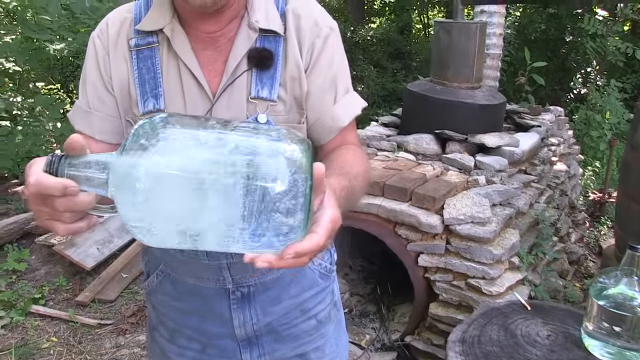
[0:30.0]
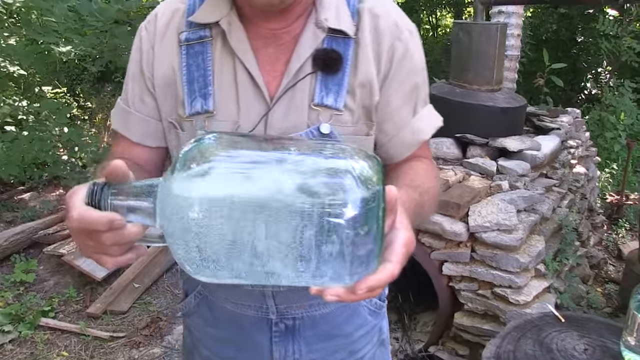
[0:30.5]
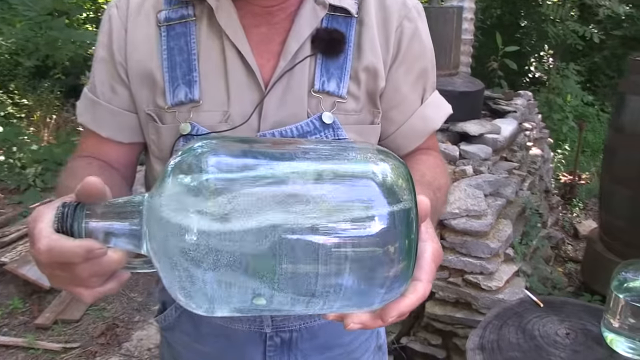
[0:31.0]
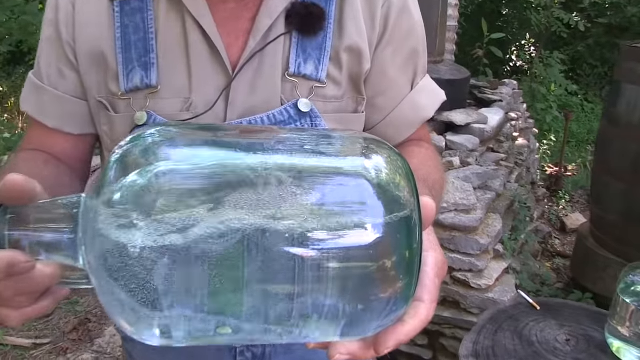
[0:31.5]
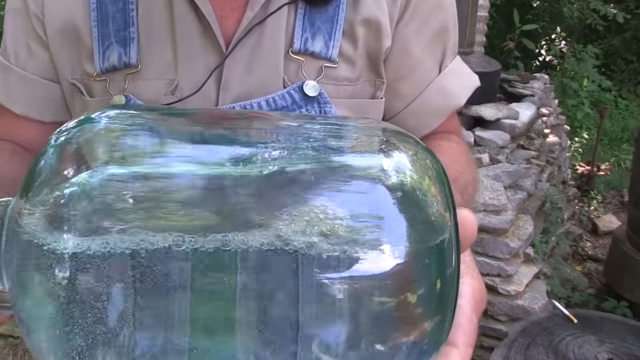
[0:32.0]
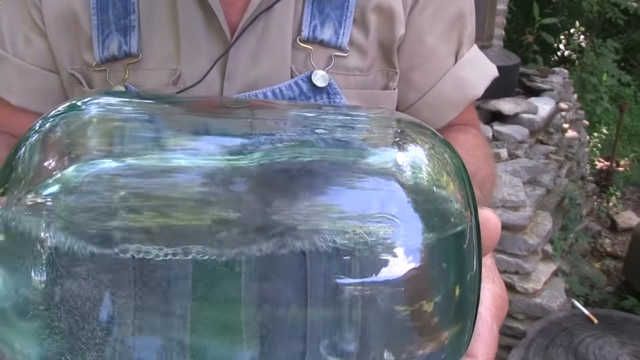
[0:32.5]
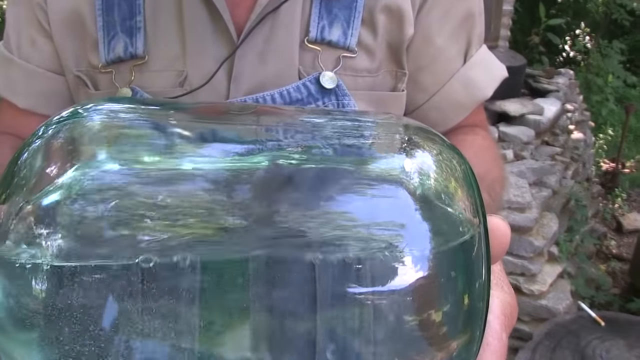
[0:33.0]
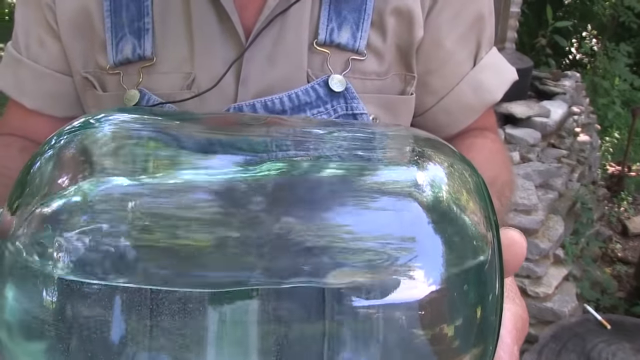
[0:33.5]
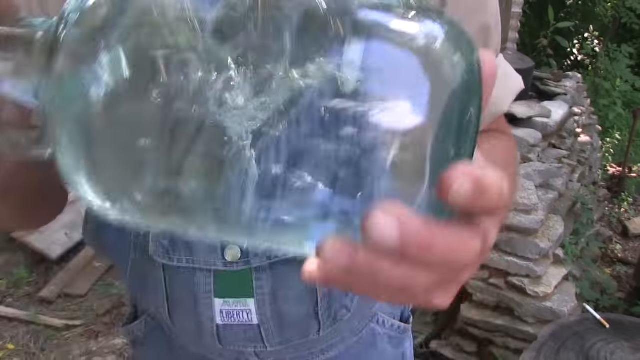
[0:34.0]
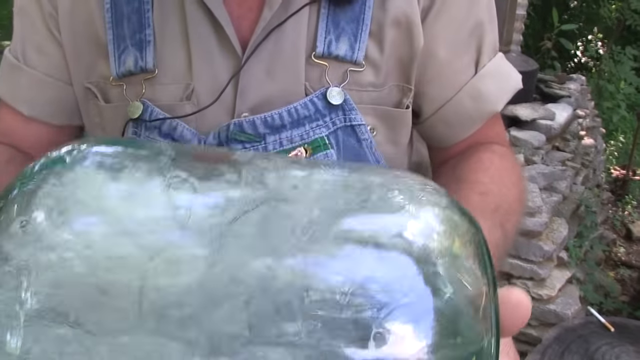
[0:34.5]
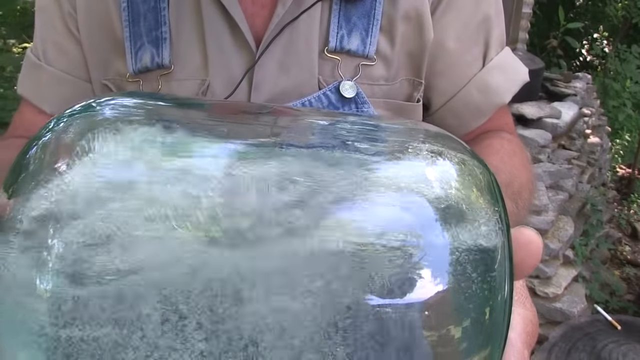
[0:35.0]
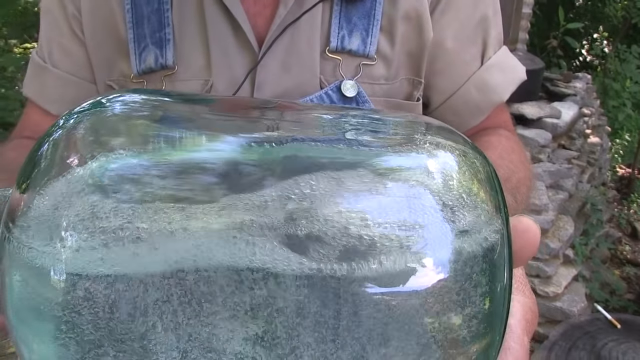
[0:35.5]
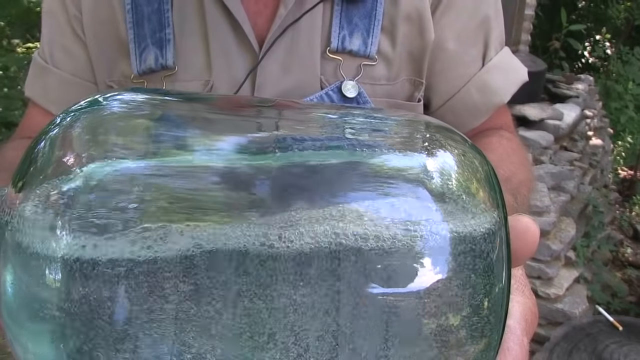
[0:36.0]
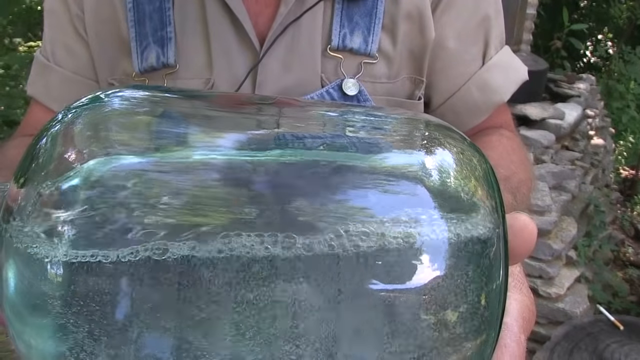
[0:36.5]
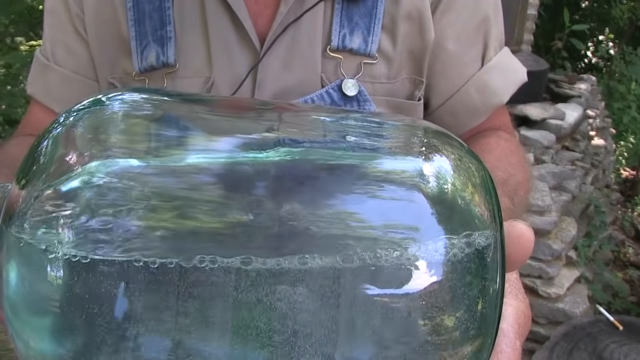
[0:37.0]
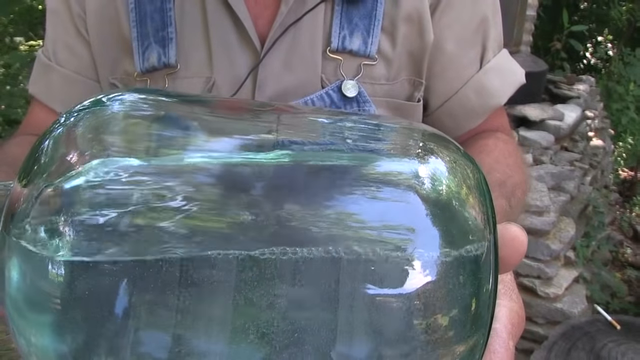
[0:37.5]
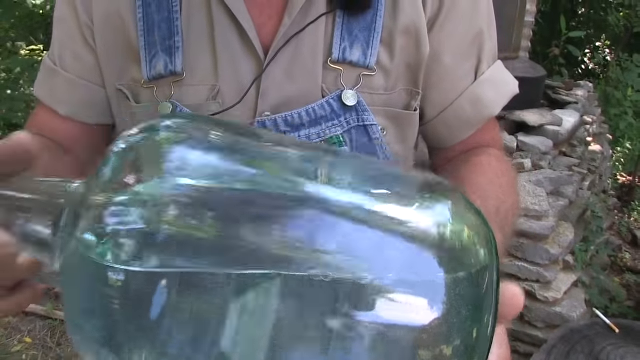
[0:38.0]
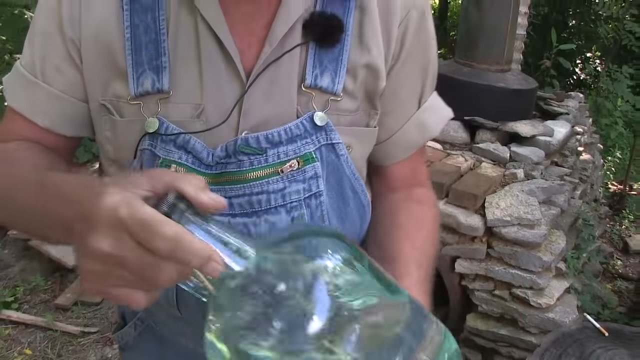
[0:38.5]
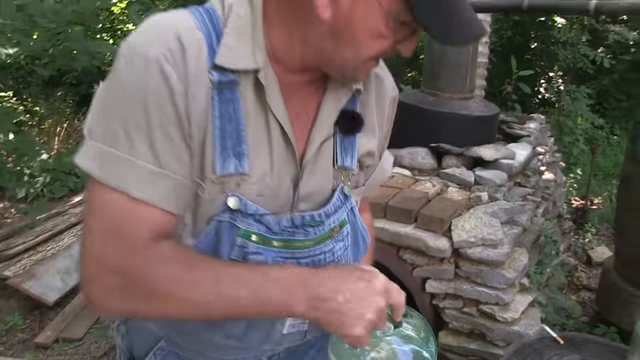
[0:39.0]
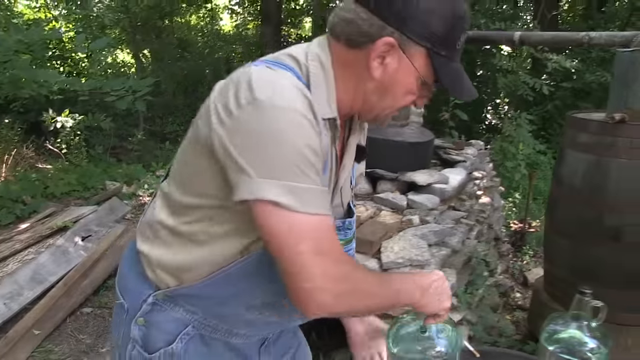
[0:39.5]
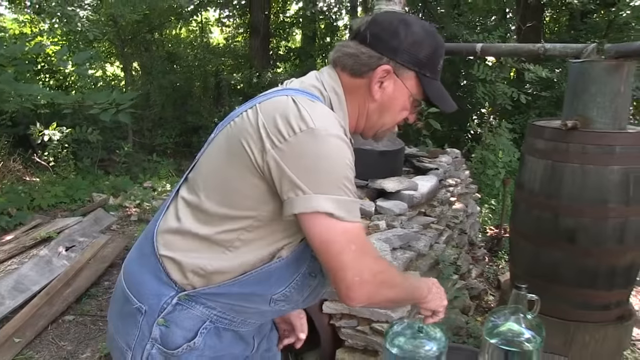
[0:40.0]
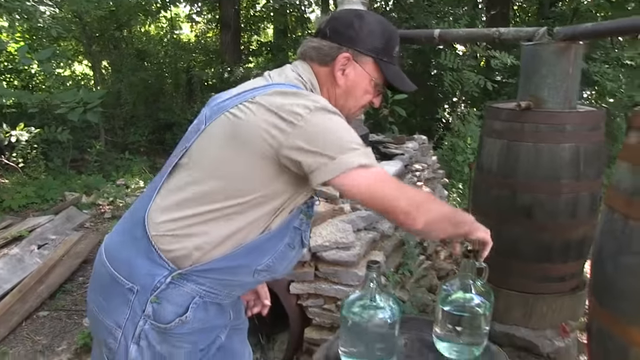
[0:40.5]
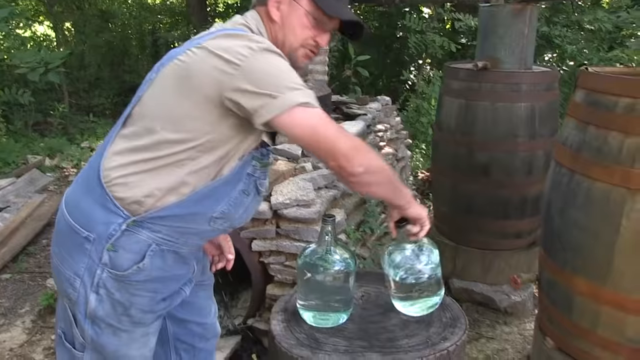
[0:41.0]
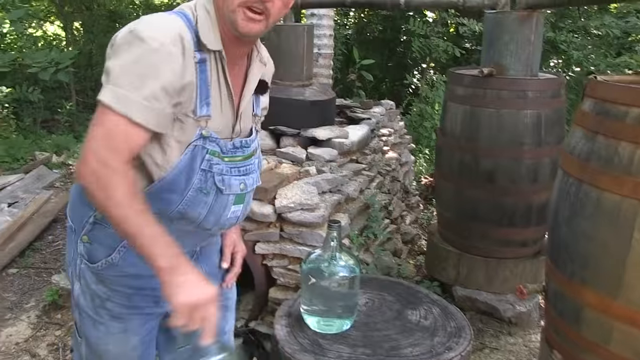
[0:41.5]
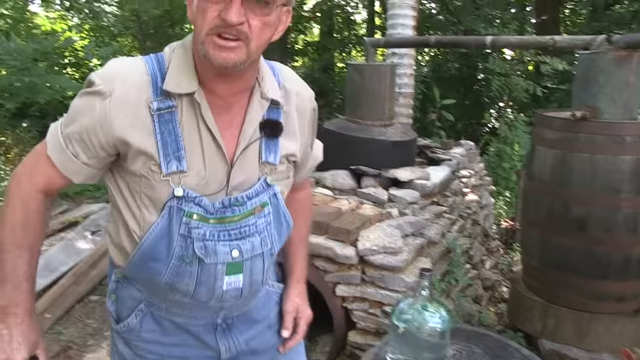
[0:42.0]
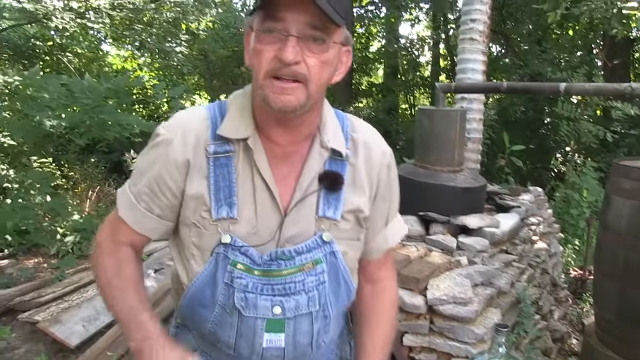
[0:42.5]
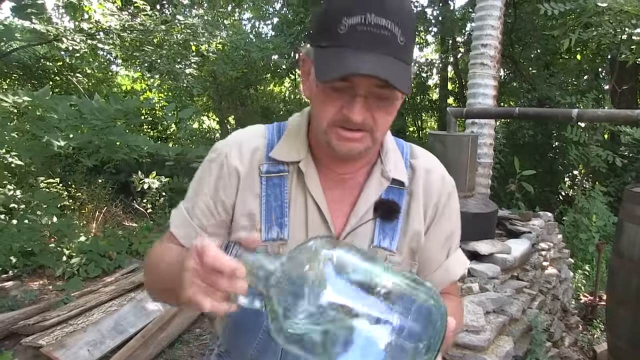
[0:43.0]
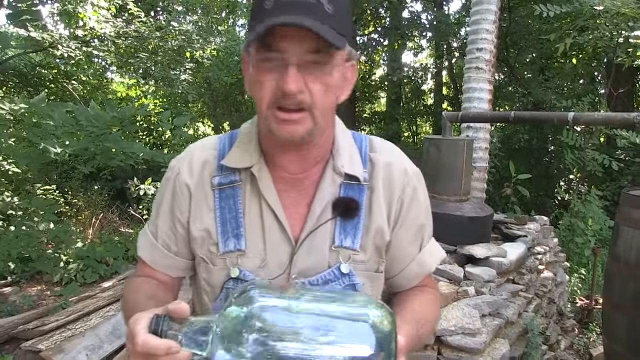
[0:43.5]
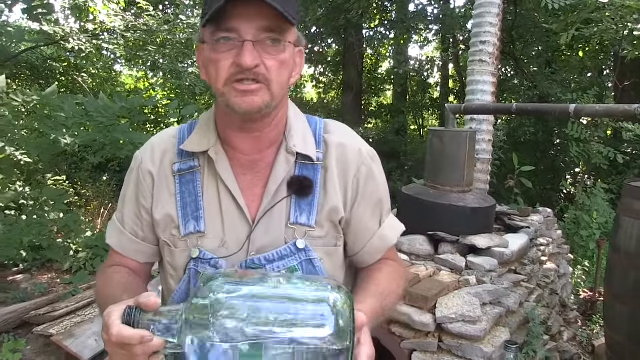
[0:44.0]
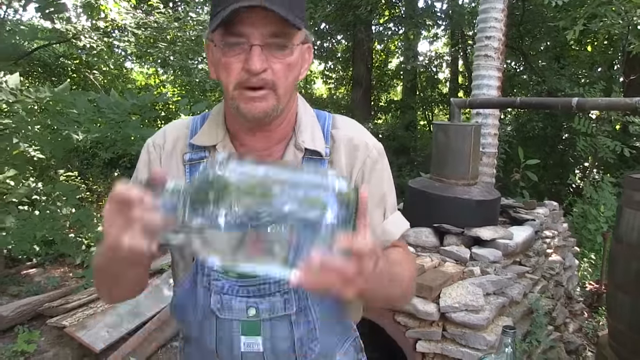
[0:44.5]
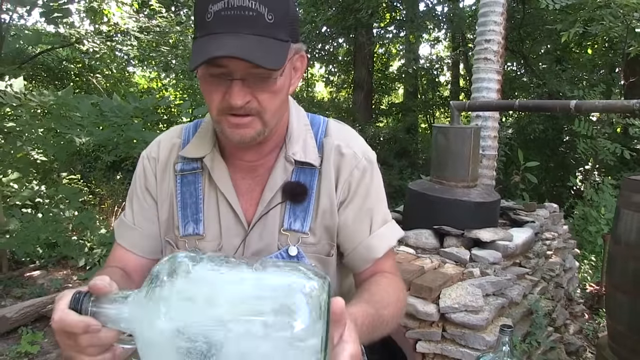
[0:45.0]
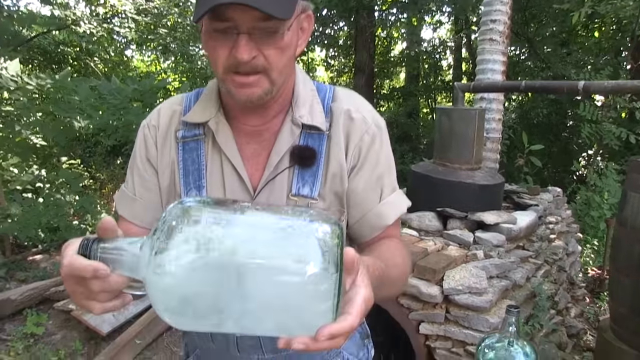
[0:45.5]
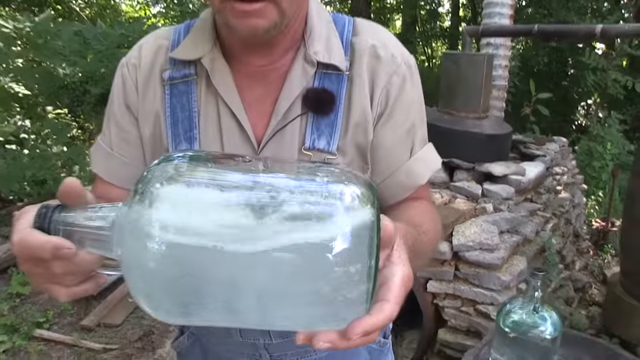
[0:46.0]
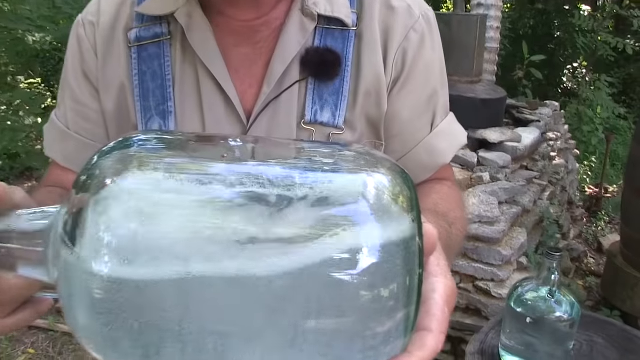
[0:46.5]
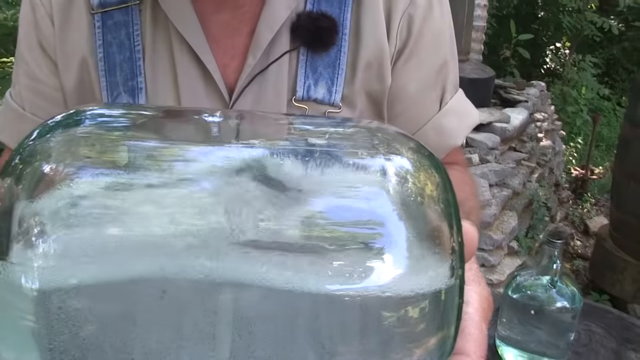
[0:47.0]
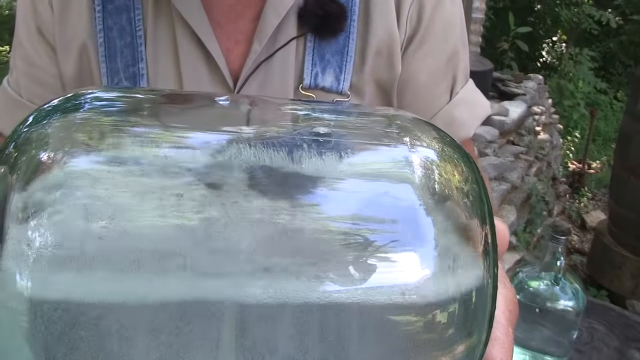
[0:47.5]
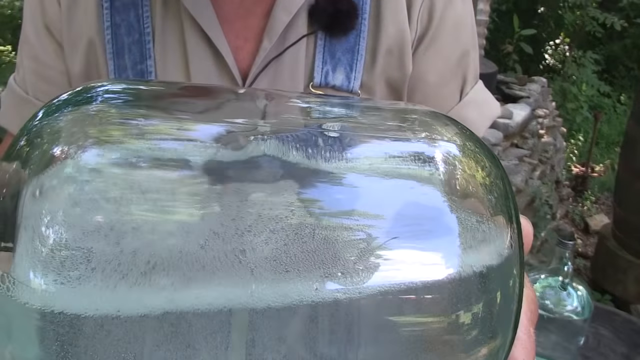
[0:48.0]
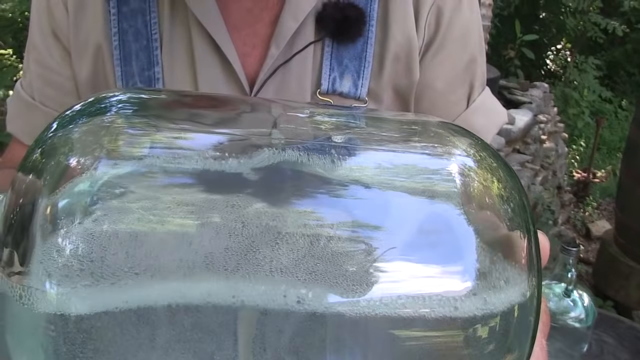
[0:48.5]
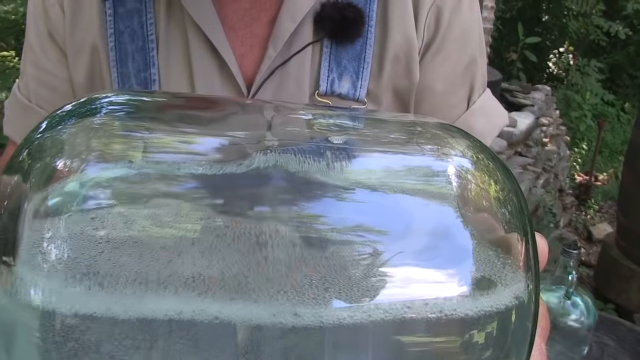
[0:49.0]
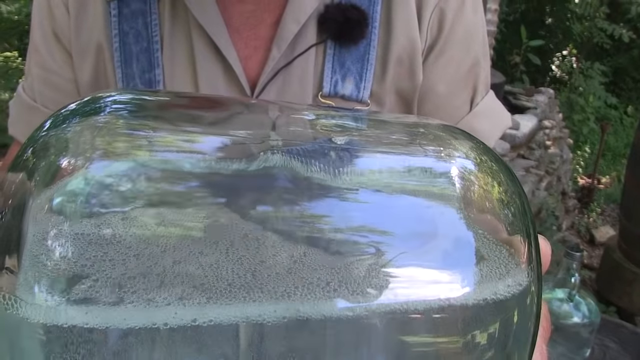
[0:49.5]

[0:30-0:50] The man shakes the presumed moonshine containers, apparently to show a difference in clarity or texture between the liquids. The containers are transparent glass. He also shakes the second container, which looks identical to the first. After he shakes both, a difference is visible in the bubble froth between them: one appears frothier while the other appears cleaner, possibly an indicator of their quality.